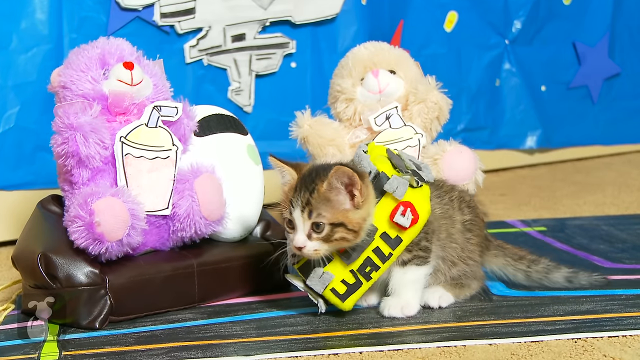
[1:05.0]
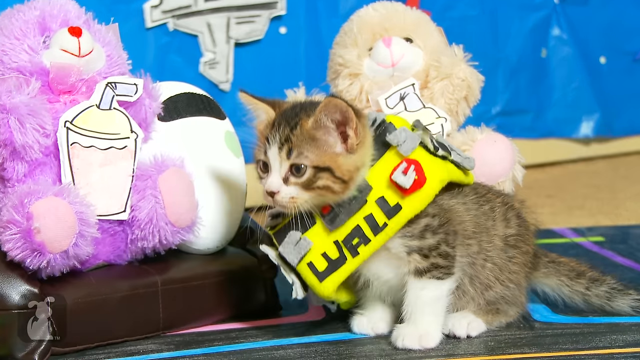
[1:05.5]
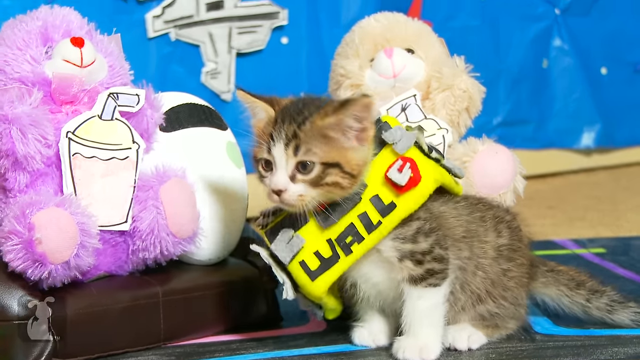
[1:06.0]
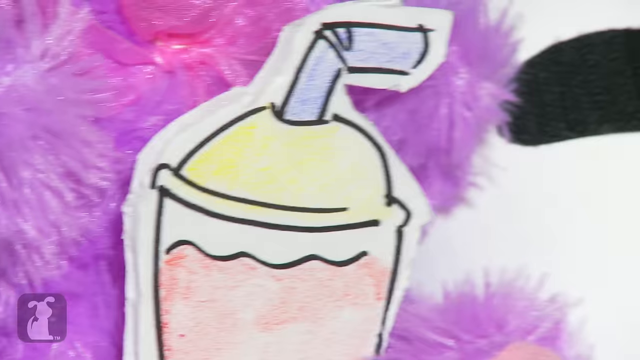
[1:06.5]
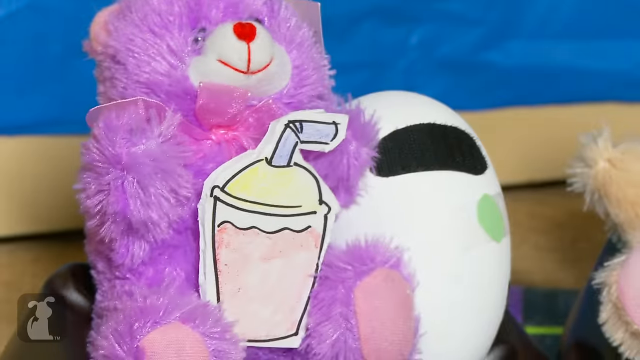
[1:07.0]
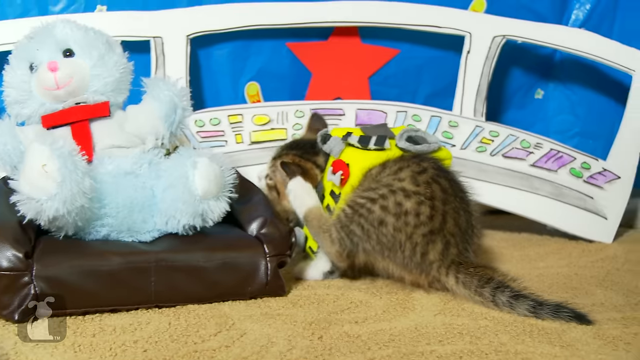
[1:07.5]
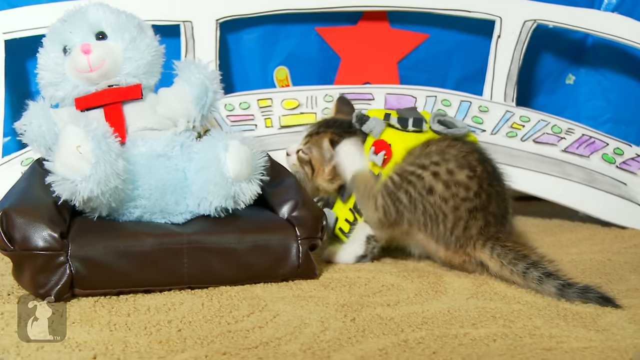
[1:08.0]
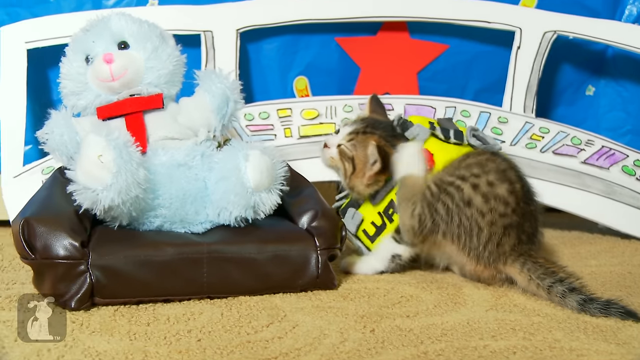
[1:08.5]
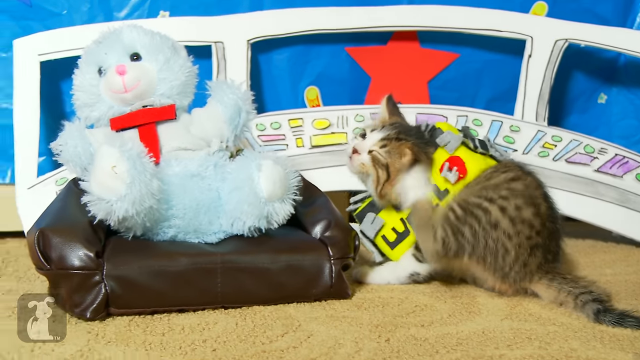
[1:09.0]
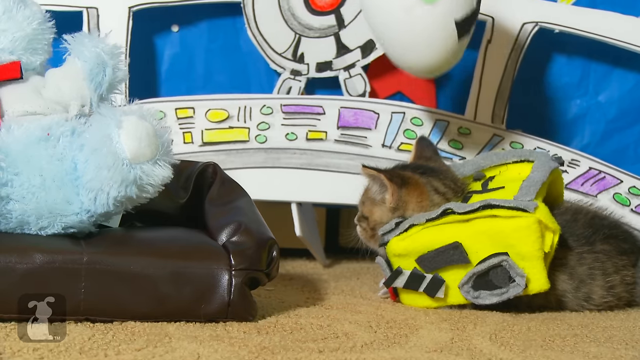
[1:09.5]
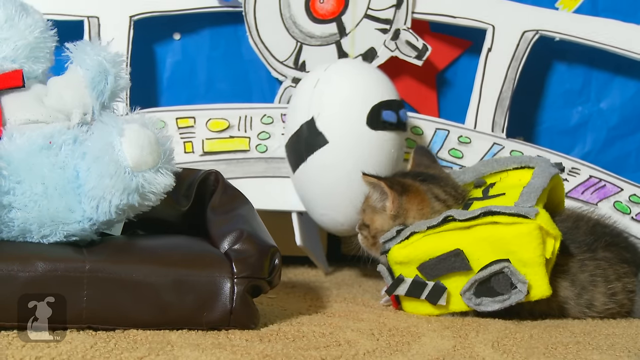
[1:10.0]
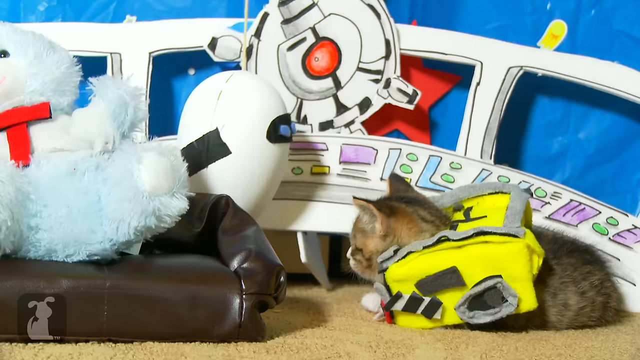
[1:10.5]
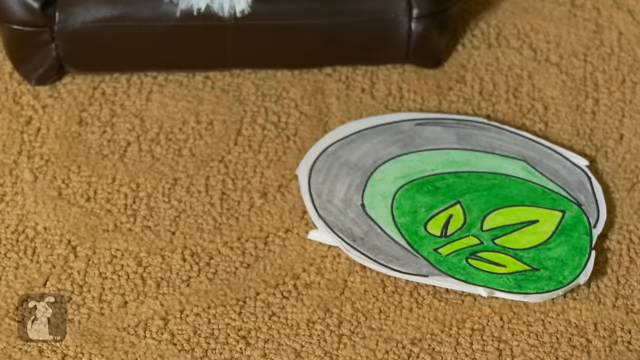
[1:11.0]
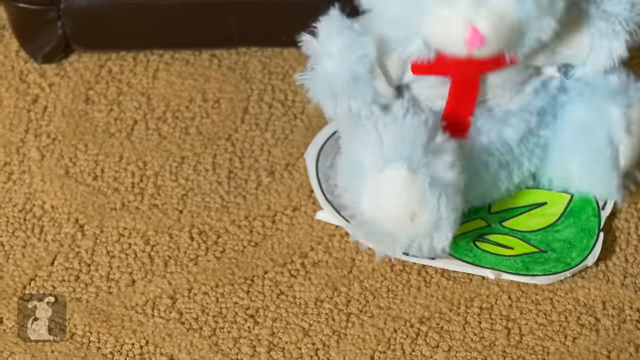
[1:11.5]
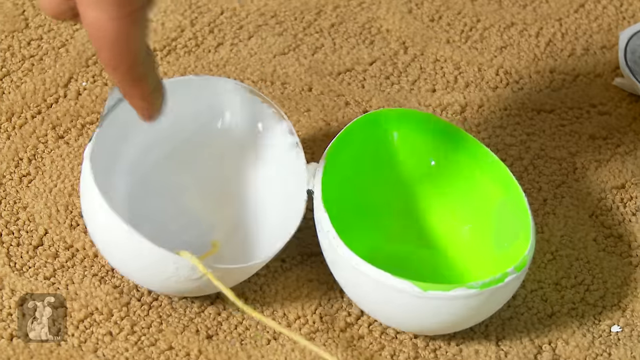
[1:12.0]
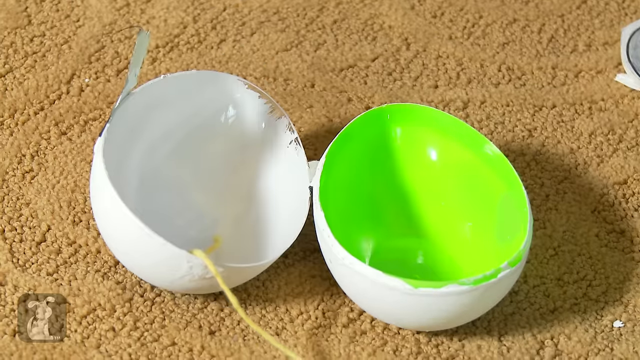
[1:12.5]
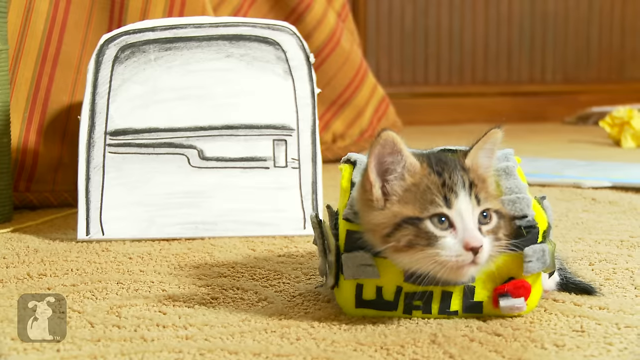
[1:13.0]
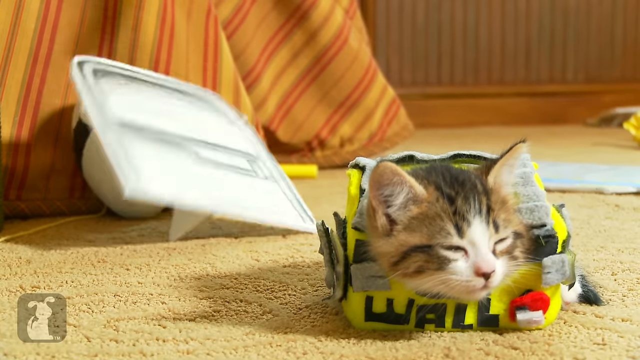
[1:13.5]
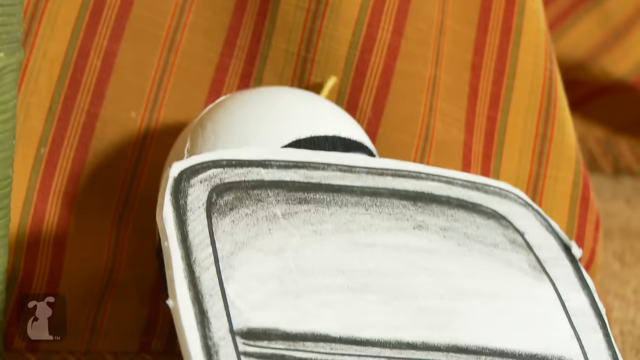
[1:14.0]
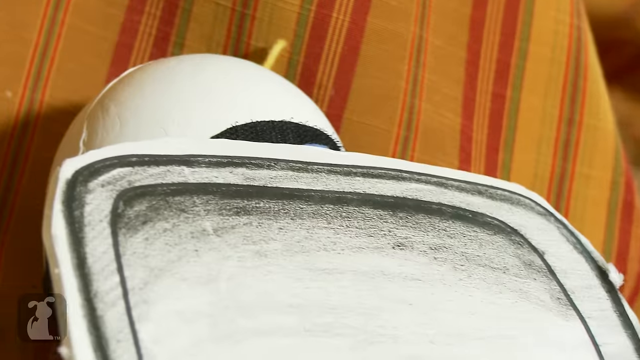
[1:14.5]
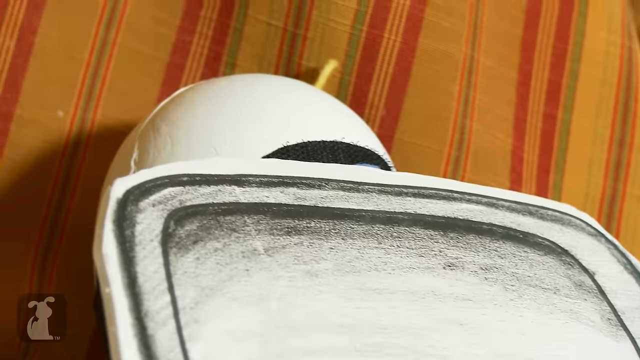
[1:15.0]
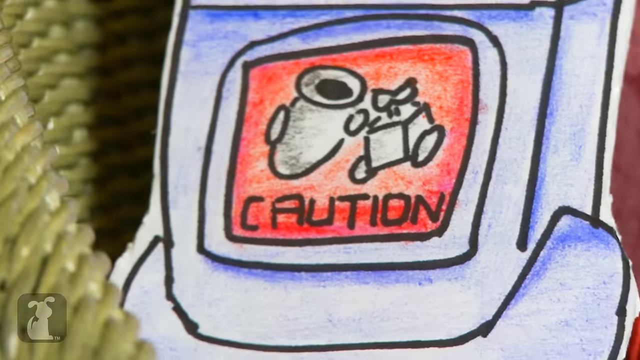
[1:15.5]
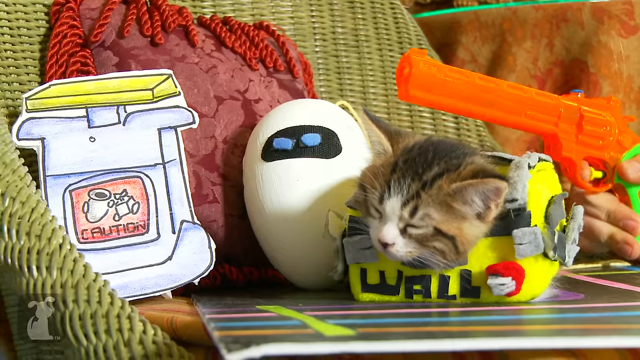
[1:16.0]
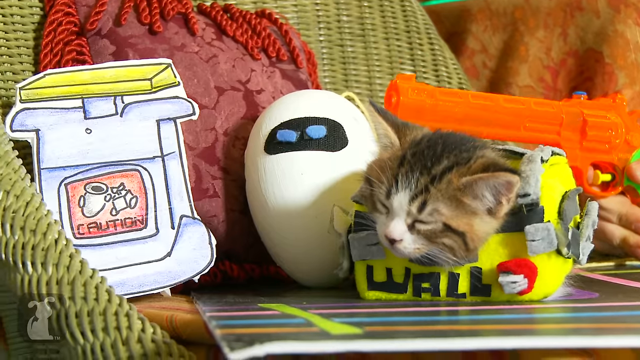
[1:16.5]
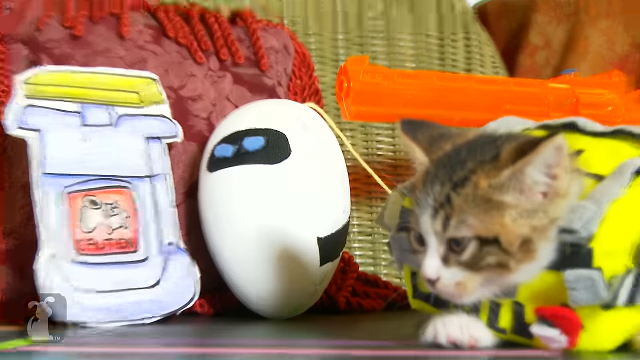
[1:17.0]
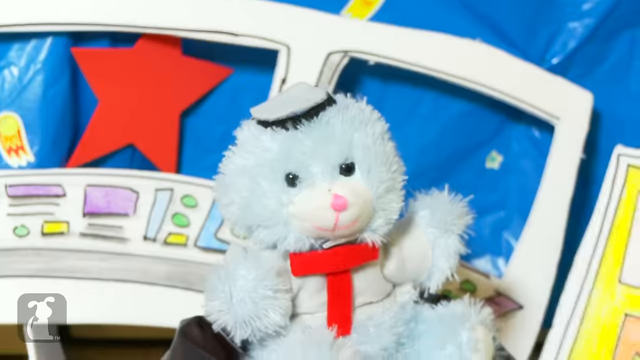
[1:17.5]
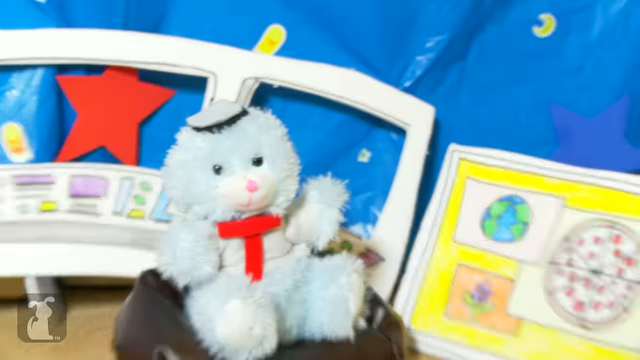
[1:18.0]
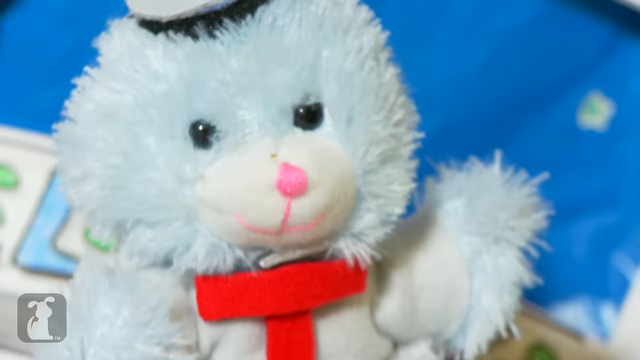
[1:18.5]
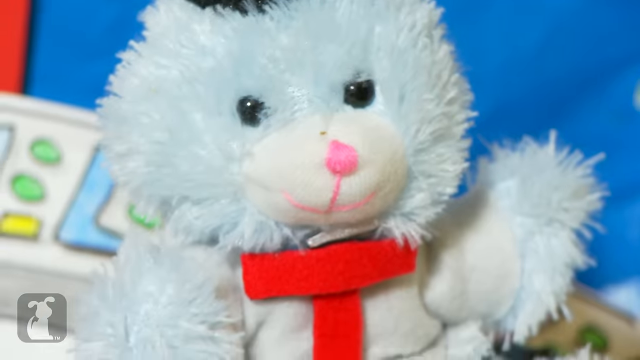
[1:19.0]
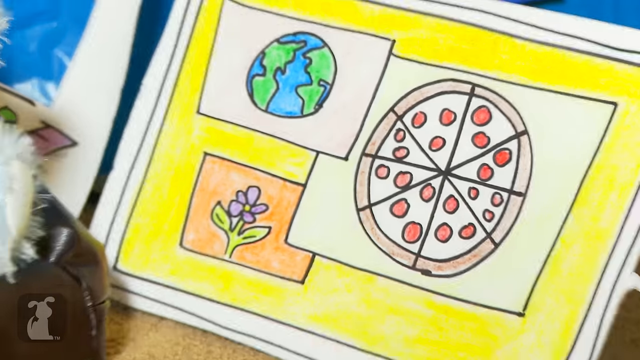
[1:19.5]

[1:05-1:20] The cat is next to the sheep-like creatures it found, sniffing near the pink one, which has some sort of drink next to it. The environment is surrounded by what seems to be advanced technology, with some sort of computer terminal in the background. The outside is visible, seemingly with an orange or reddish star in the middle. For a second the cat stops and scratches its ear. The cat once again falls asleep, not caring about the things around it. Another robotic entity shows up, looking a bit evil because of its red lights. A little later, an orange gun appears above the cat shooting at something else, and a fridge-like object that was hit by a banana is visible.